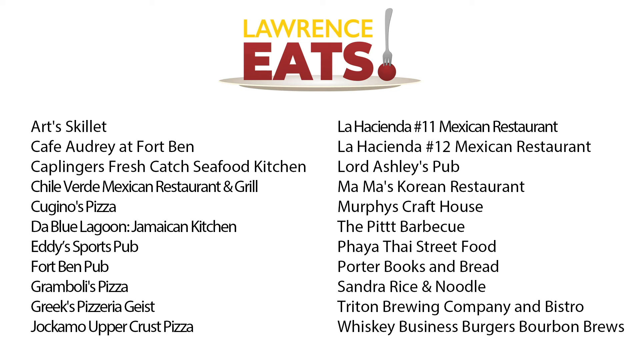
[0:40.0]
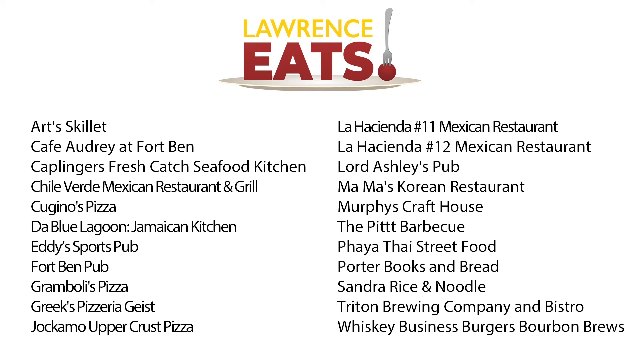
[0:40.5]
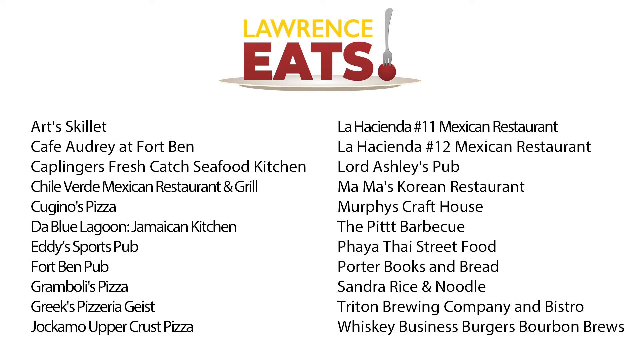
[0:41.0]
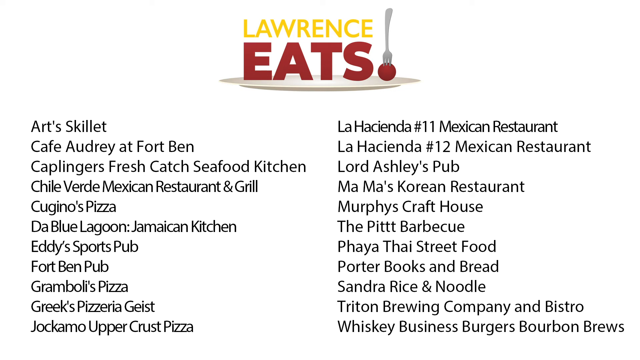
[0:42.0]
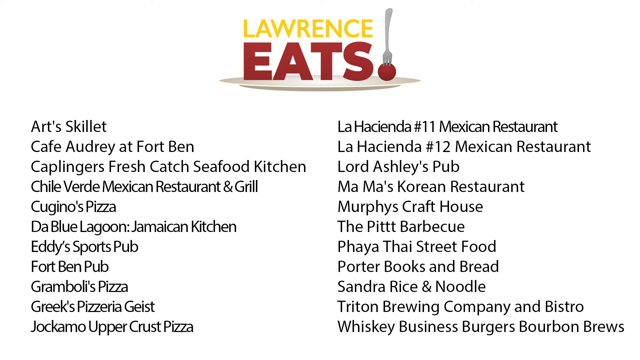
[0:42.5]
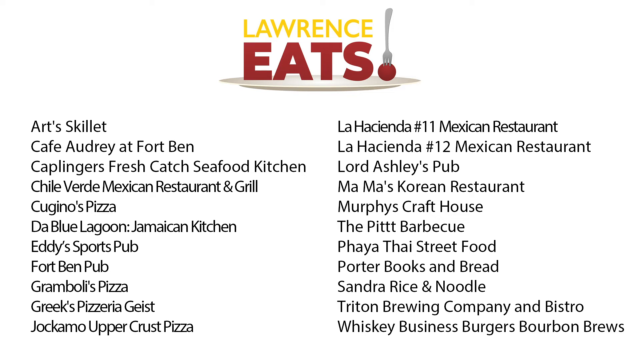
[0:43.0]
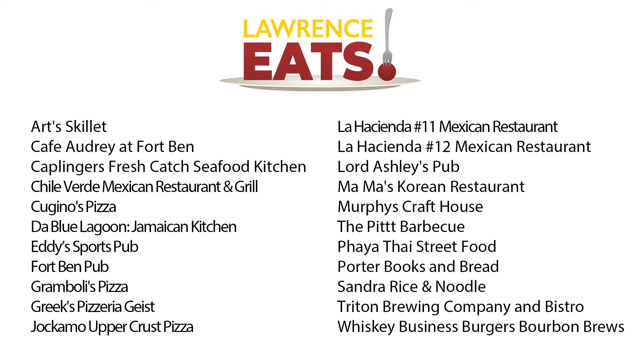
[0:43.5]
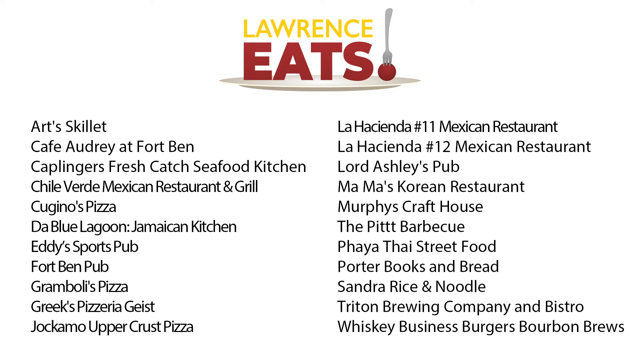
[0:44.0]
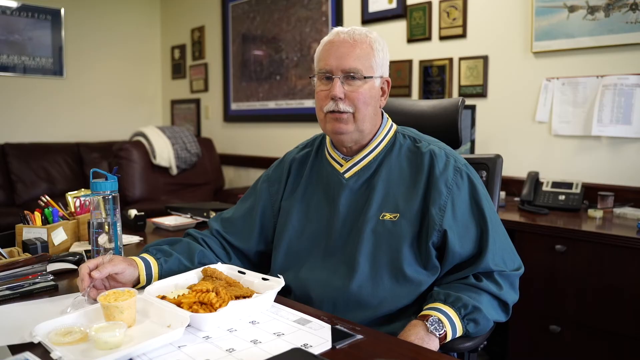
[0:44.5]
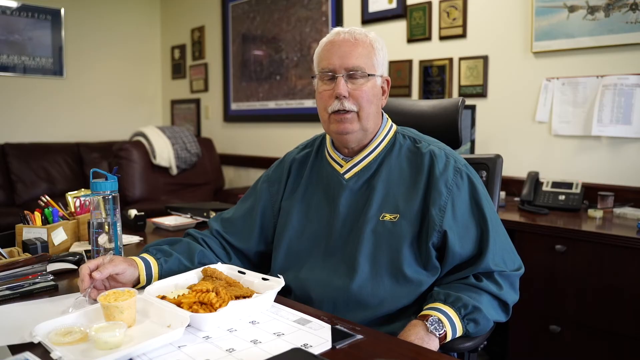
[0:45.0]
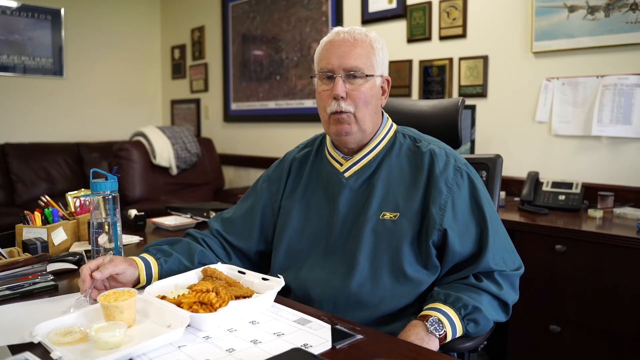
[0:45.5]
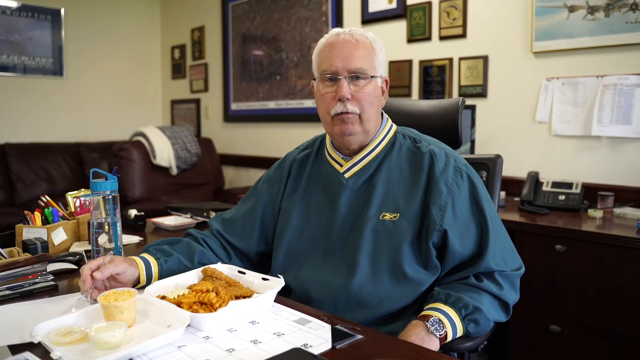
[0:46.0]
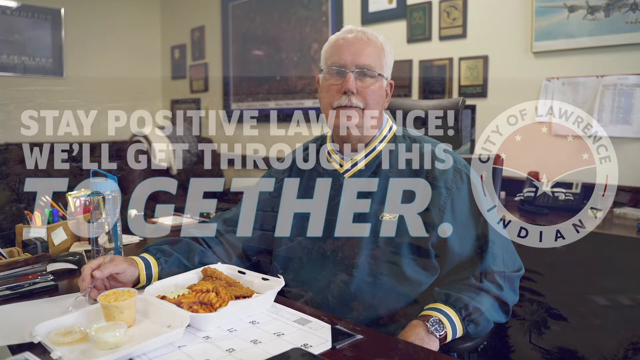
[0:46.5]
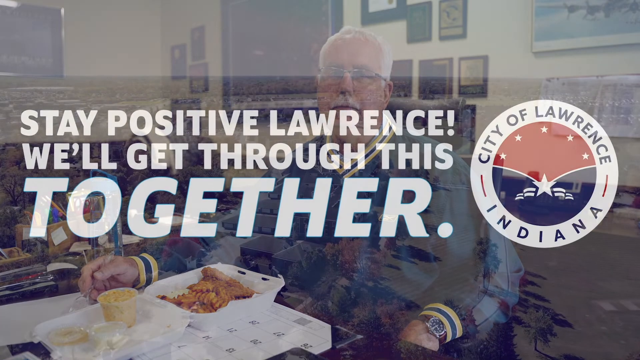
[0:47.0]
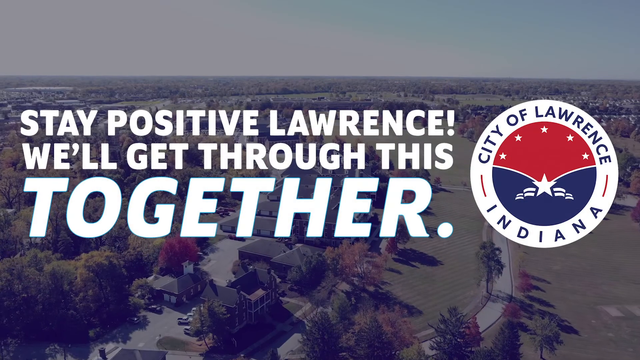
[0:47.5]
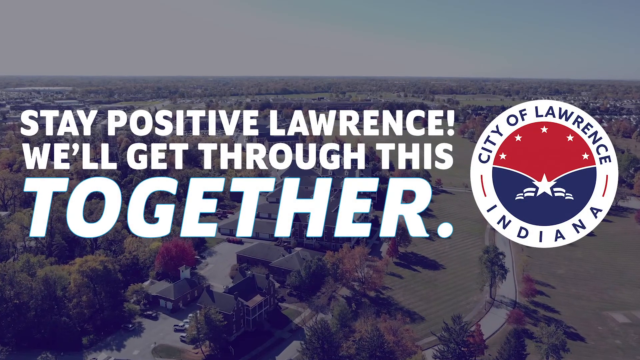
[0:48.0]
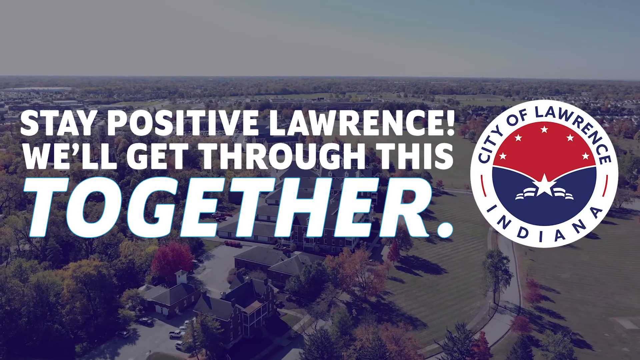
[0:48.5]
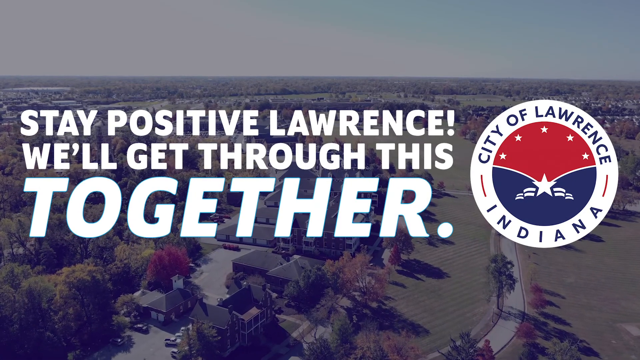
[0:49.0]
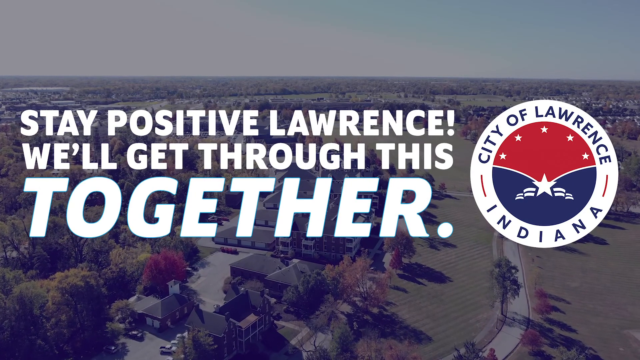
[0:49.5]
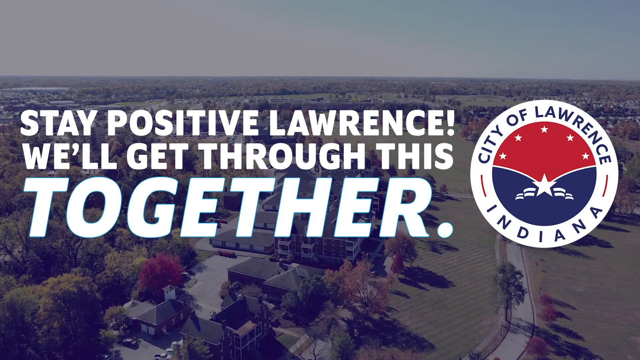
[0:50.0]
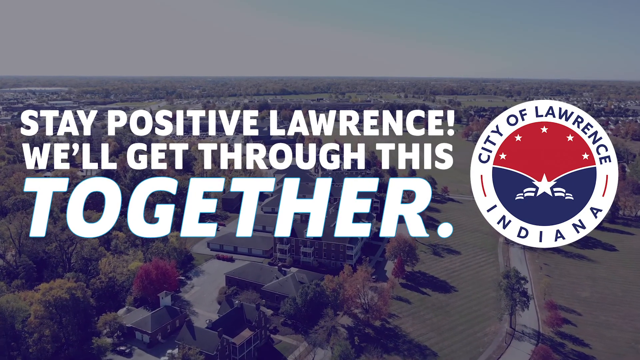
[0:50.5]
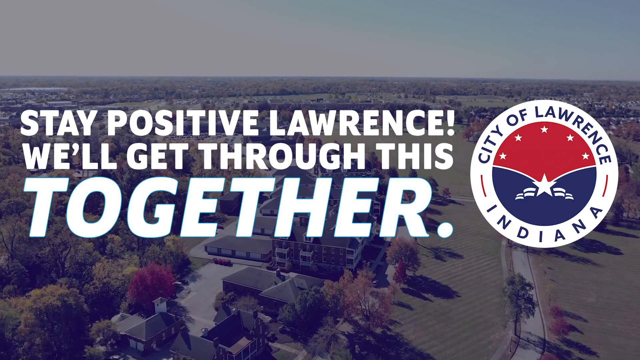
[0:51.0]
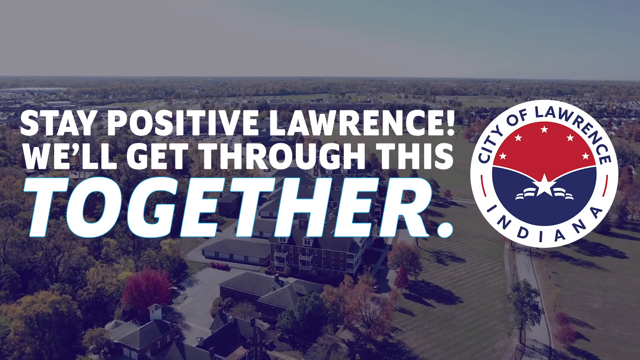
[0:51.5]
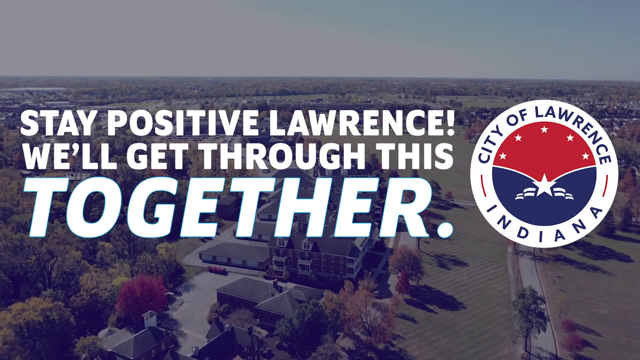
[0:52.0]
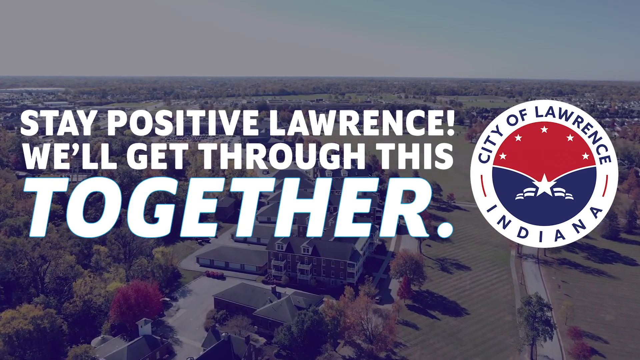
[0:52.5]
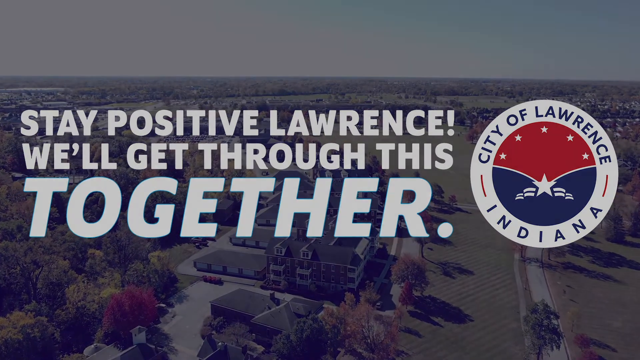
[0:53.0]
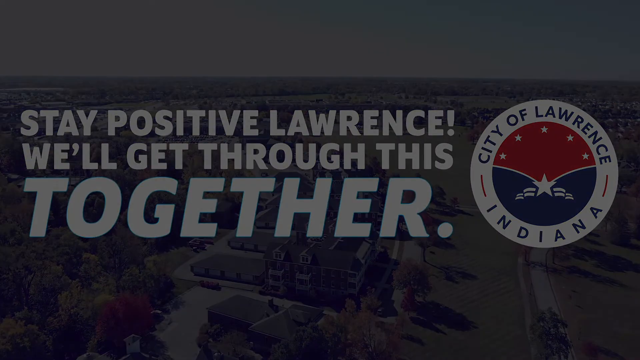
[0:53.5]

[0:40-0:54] A "Lawrence Eats" logo appears, set on a plate and shown in red, with "Lawrence" in yellow. After "Eats" is what looks like a period, but it resembles a meatball with a fork in it, on a plate. Below the logo, on a white background, a list of restaurants appears in black: "Art's Skillet", "Cafe Audrey at Fort Bend", "Kaplinger's", "Fresh Catch Seafood", "Fresh Catch Seafood Kitchen", "Chili Verde Mexican Restaurant and Grill", "Coglino's Pizza", "The Blue Lagoon", "Jamaican Kitchen", "Eddie's Sports Pub", "Fort Bend Pub", "Criboli's Pizza", "Greek Pizza Geist", "Giacomo Upper Crust", "La Hacienda 11 Mexican Restaurant", "La Hacienda 12 Mexican Restaurant", "Lord Ashley's Pub", "Mama's Korean Kitchen", "Murphy's Craft House", "The Pit Barbecue Fire", "Thai Street Food", "Porter Books and Bread", "Sando Rice Noodle", "Triton Brewing Company and Bistro", "Whiskey, Business Burger's Bourbon Brews". The video then returns to the man sitting in the chair, and something pops up on screen, apparently referring to Lawrence, Indiana.